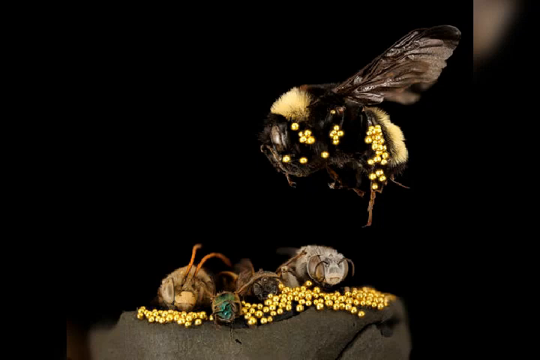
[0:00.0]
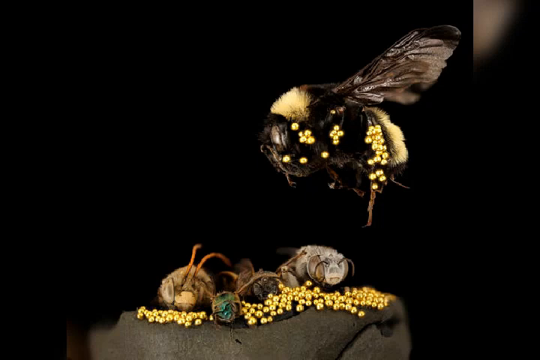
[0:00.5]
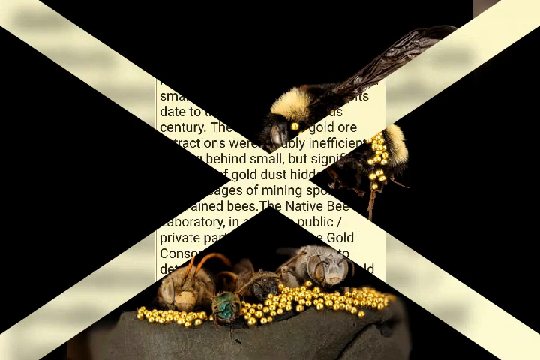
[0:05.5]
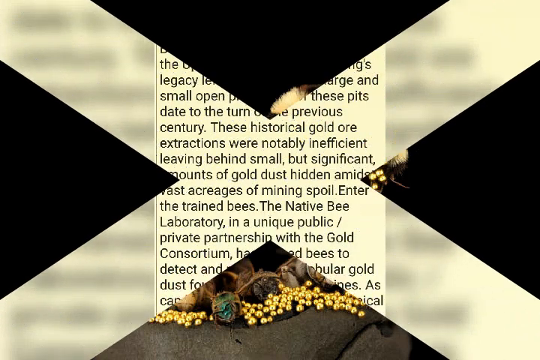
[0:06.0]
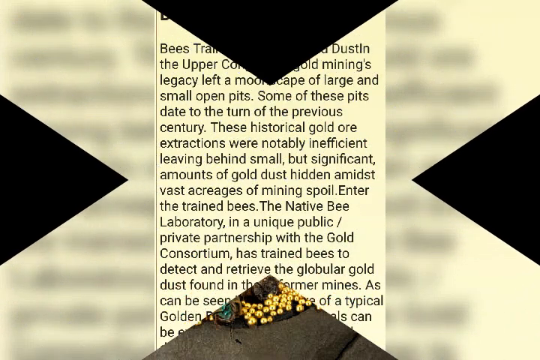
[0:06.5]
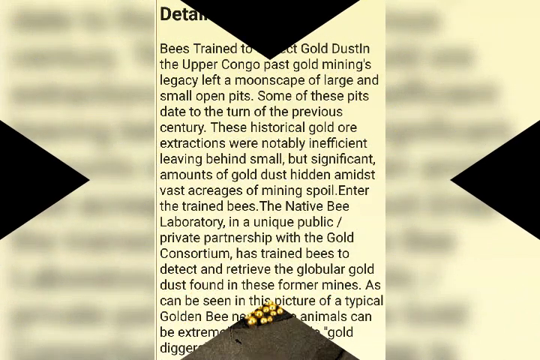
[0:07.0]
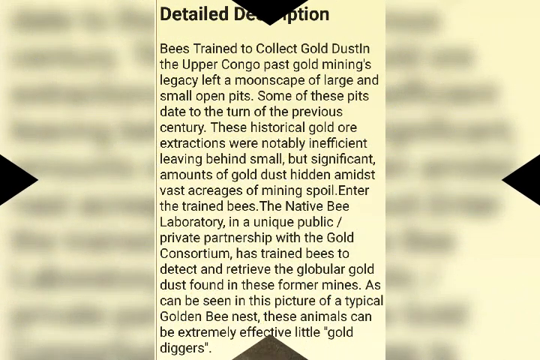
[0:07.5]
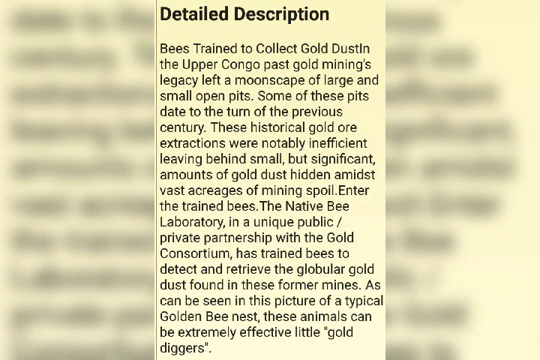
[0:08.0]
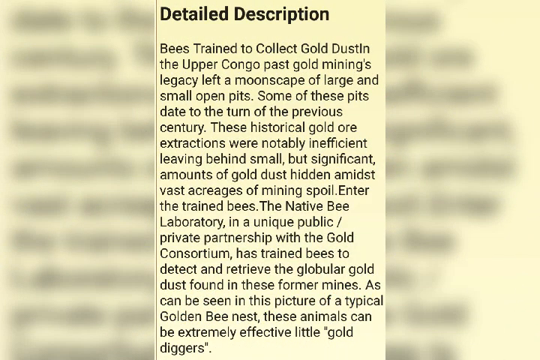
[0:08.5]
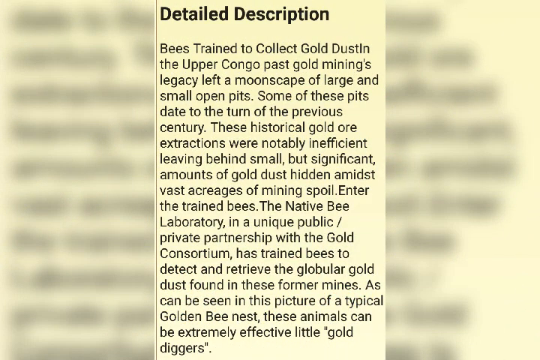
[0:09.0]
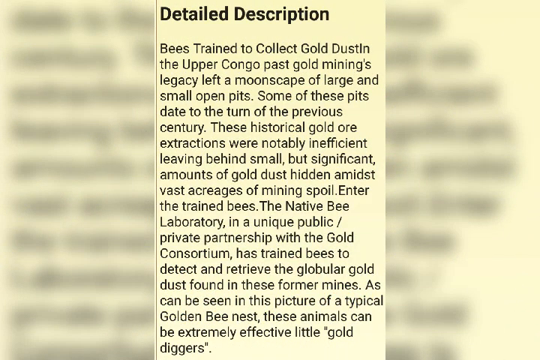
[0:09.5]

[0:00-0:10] The video opens on a static image held for a long time. It shows a honeybee partially covered in little gold beads, hovering over two smaller bees that are laying on a bed of little gold beads. It is unclear what the bed is made of; it looks like brown cloth. The image stays on screen for a few seconds, then a graphic split transition leads to on-screen text that reads: "detailed description. Bees trained to collect gold dust in the upper Congo past gold mining's legacy left a moonscape of large and small open pits. Some of those pits date to the turn of the previous century. These historical gold ore extractions were noticeably inefficient, leaving behind small but significant amounts of gold dust hidden amidst vast acreages of mining spoil. Enter the trained bees, the native bee laboratory and a unique public-private partnership with the gold consortium has trained bees to detect and retrieve the globular gold dust found in these former mines. As can be seen in this picture of a typical golden bee nest, these animals can be extremely effective."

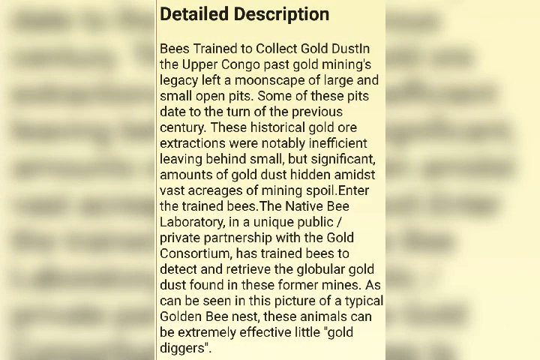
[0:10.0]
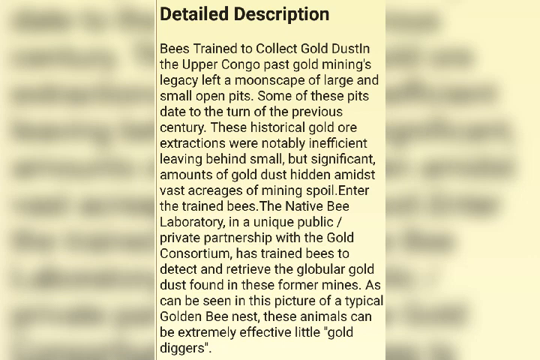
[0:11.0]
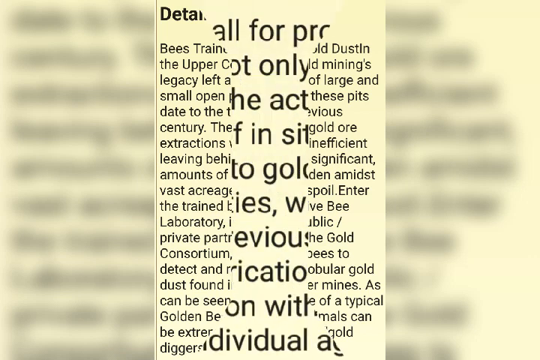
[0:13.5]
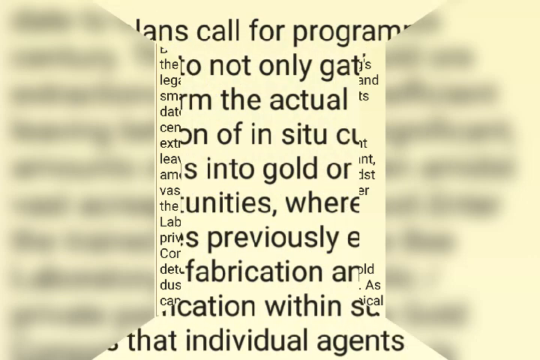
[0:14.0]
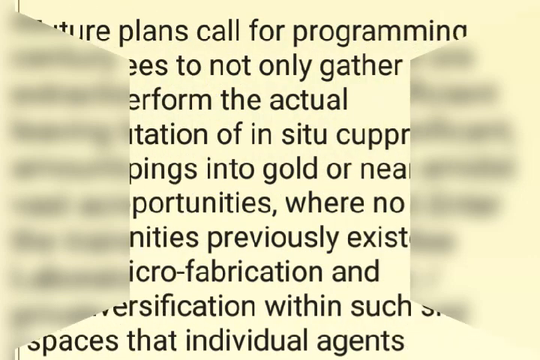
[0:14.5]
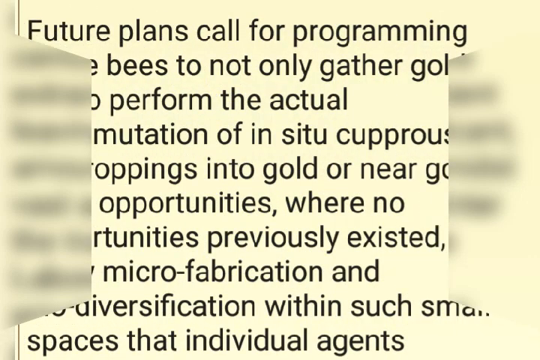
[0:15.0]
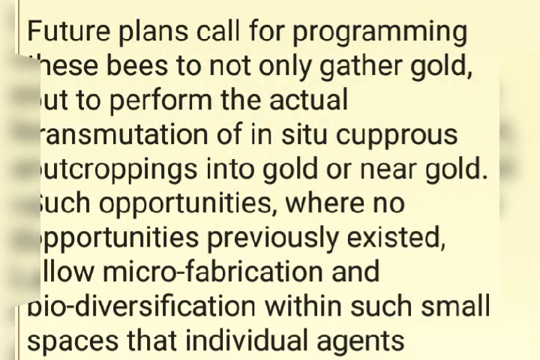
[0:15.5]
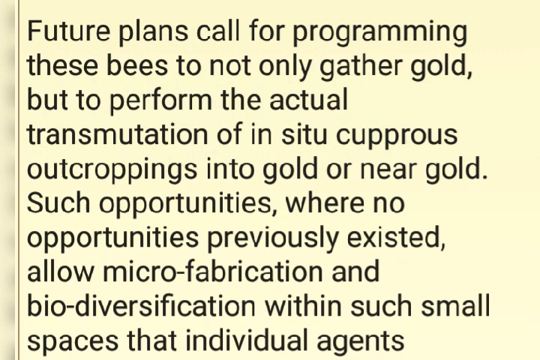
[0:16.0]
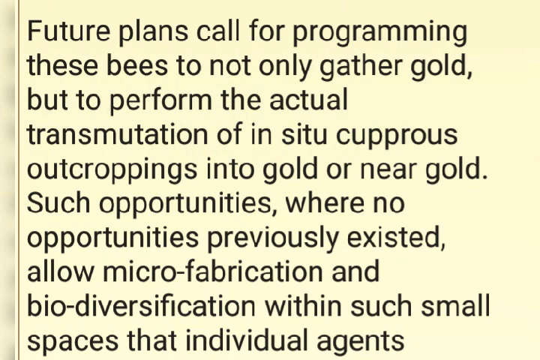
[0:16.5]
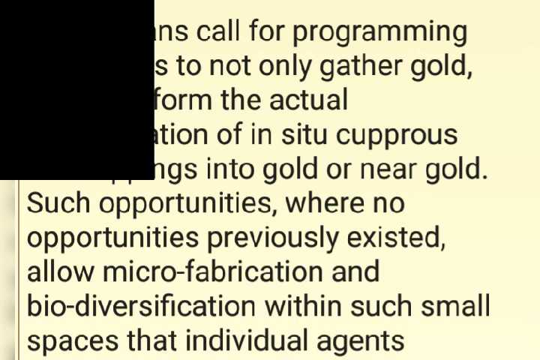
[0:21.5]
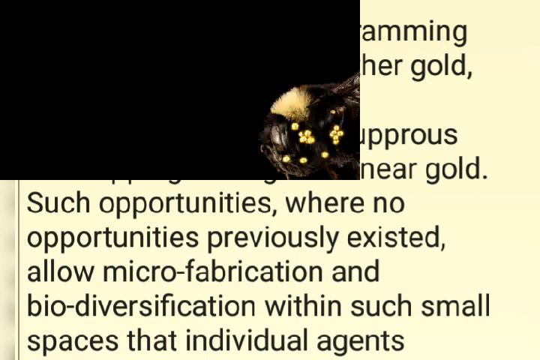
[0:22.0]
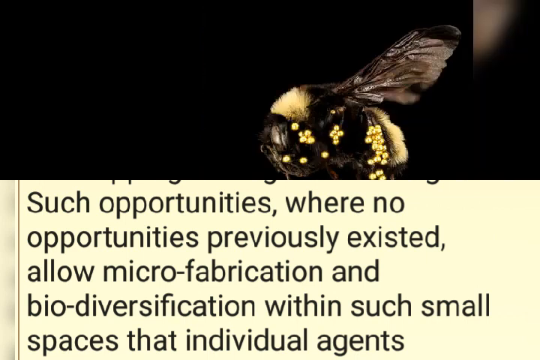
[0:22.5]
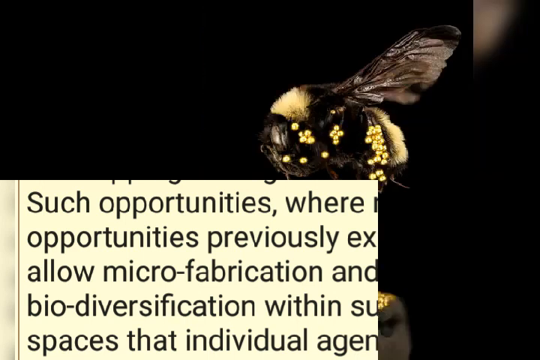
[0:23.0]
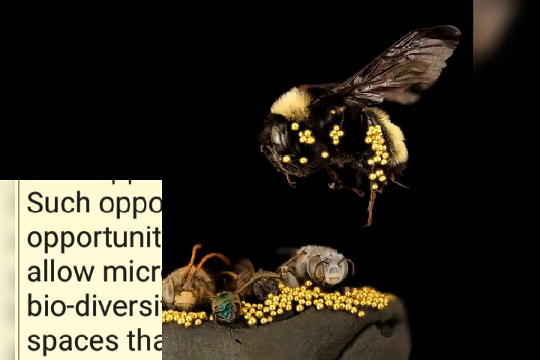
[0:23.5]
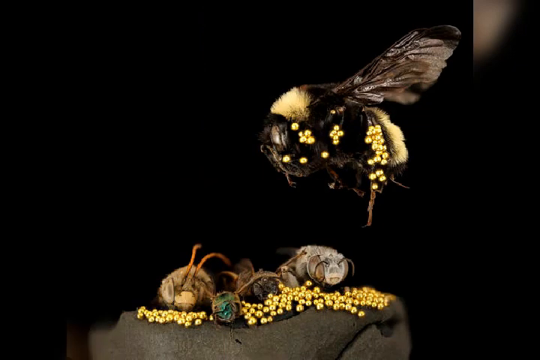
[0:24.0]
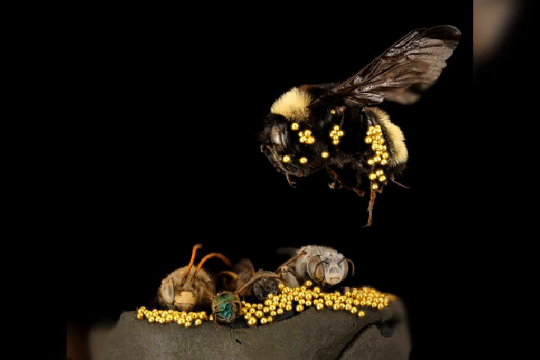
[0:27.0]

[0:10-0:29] The detailed description text is on screen, styled to look like a newspaper article with the headline "detailed description" and the text "Bees trained to collect gold dust in the upper Congo past gold mining's legacy left a moonscape of large and small open pits. Some of these pits date to the turn of the previous century. These historical gold ore extractions were noticeably inefficient, leaving behind small but significant amounts of gold dust hidden amidst vast acreages of mining spoil. Enter the trained bees. The Native Bee Laboratory, in a unique public-private partnership with the Gold Consortium, has trained bees to detect and retrieve the globular gold dust found in these former mines. As can be seen in this picture of a typical golden bee nest, these animals can be extremely effective little gold." The text stays on screen for a few seconds, then a video transition leads to another block of text in the same font on a gold-colored background: "Future plans call for programming these bees to not only gather gold but to perform the actual transmutation of in-situ coprous outcroppings into gold or near gold. Such opportunities, where no opportunities previously existed, allow micro-fabrication and bio-diversification within such small". The text cuts off, and a black box extends over it in another video transition. Once again a static image appears, the golden bee's nest: one hovering honey bee covered in little gold beads, with two smaller bees below it laying atop little gold beads.